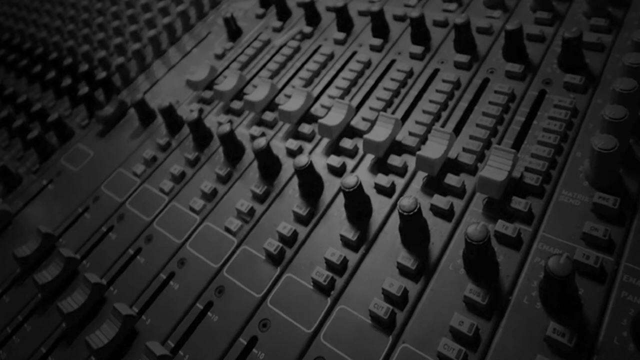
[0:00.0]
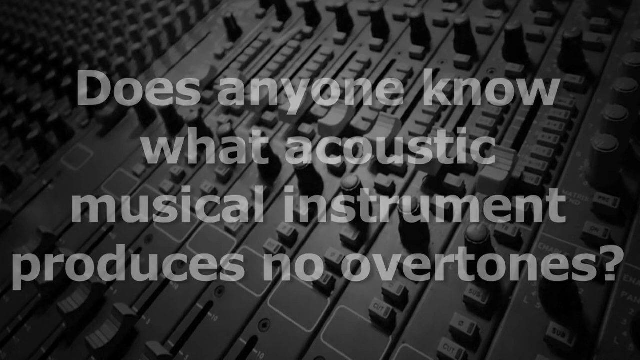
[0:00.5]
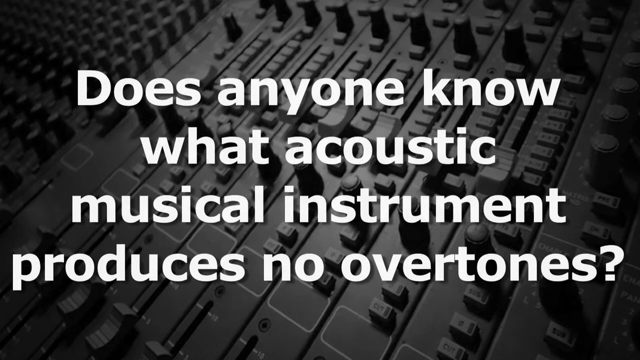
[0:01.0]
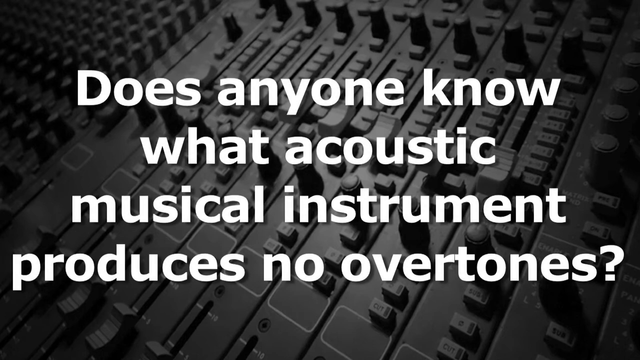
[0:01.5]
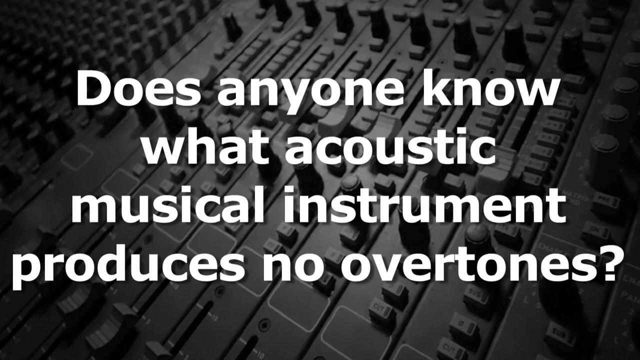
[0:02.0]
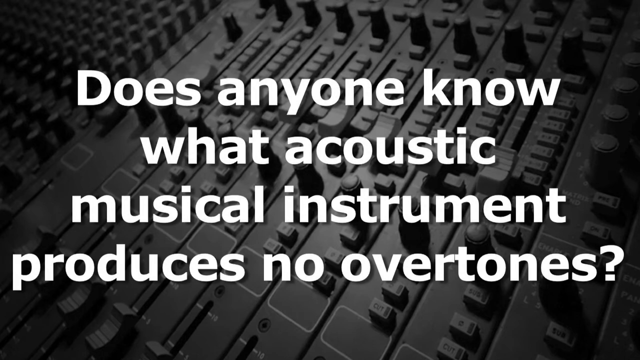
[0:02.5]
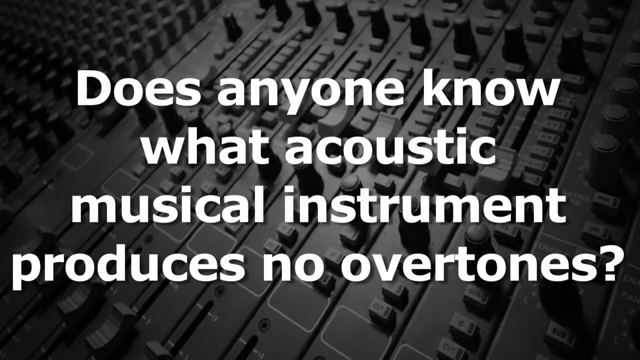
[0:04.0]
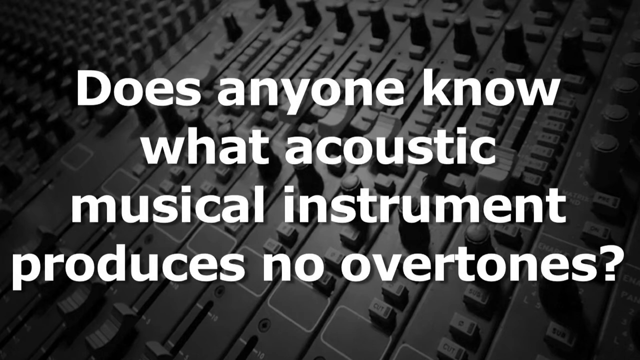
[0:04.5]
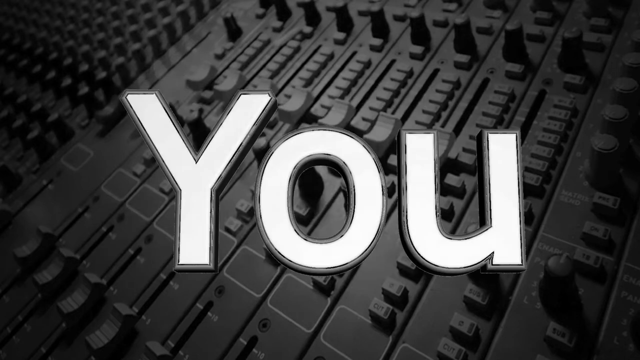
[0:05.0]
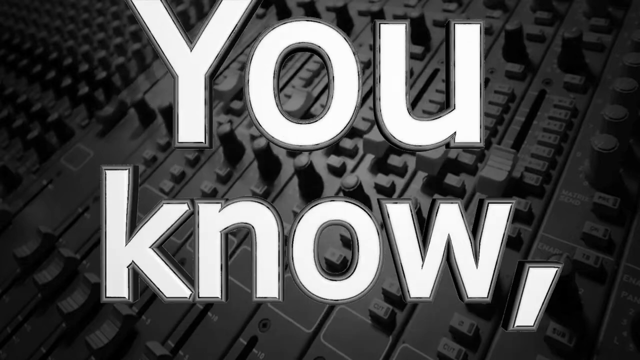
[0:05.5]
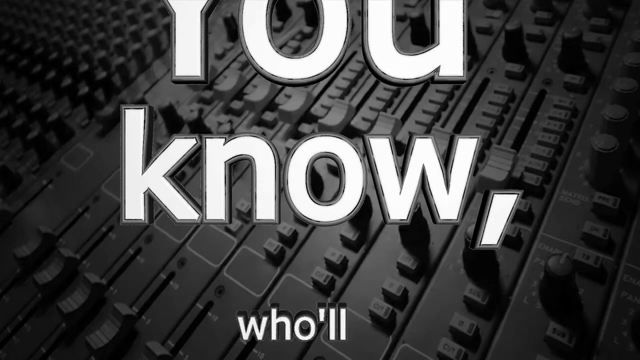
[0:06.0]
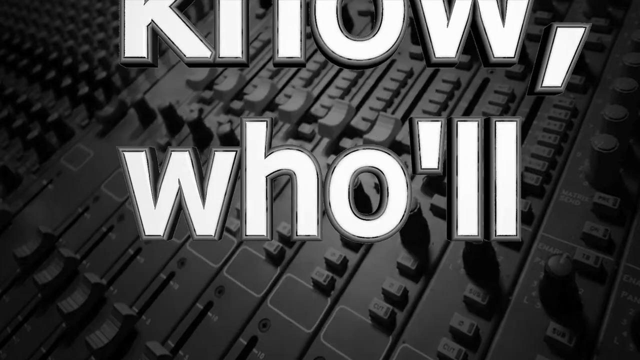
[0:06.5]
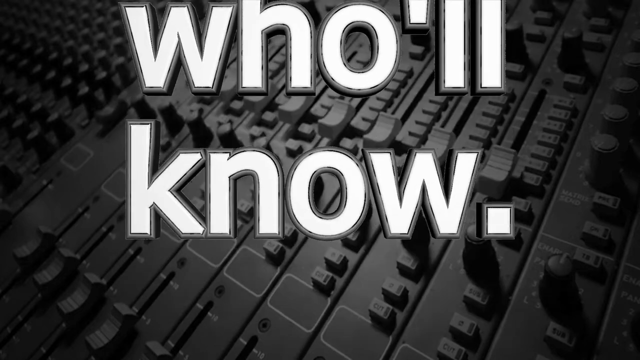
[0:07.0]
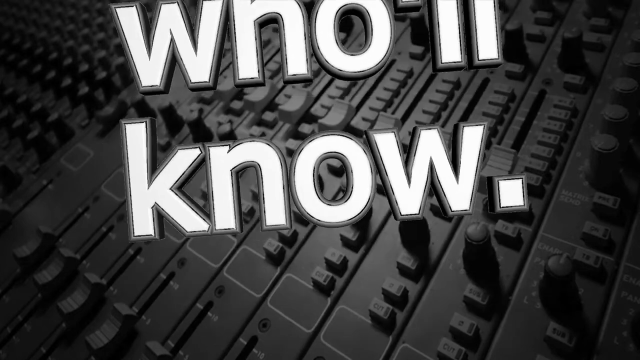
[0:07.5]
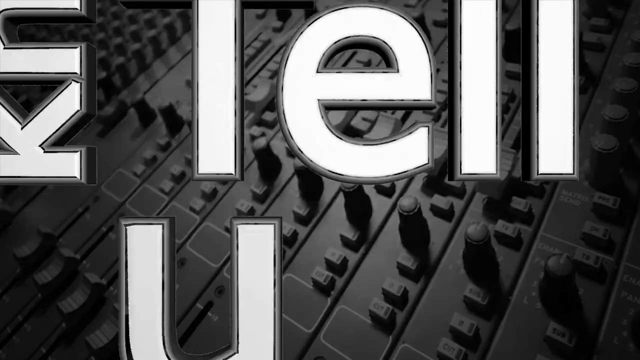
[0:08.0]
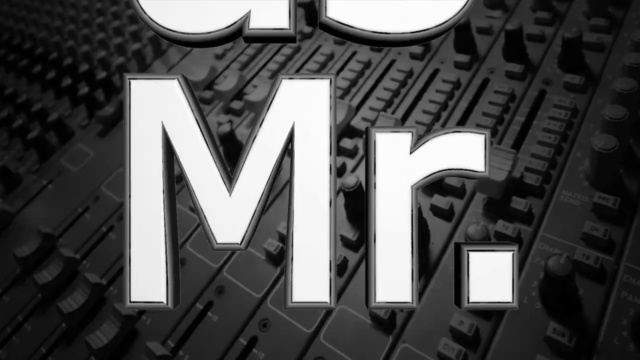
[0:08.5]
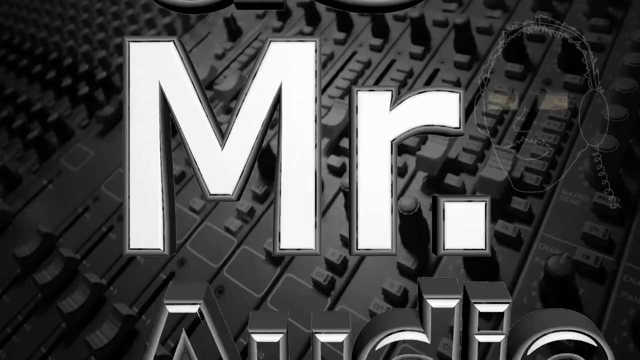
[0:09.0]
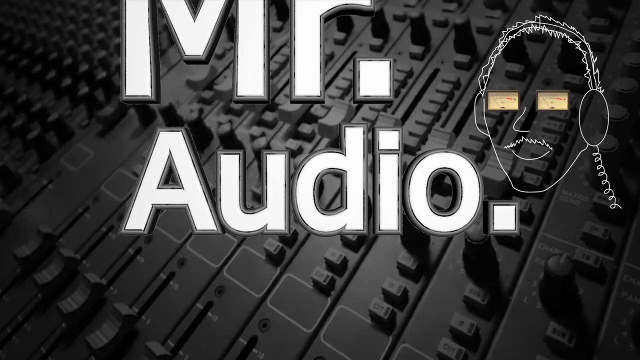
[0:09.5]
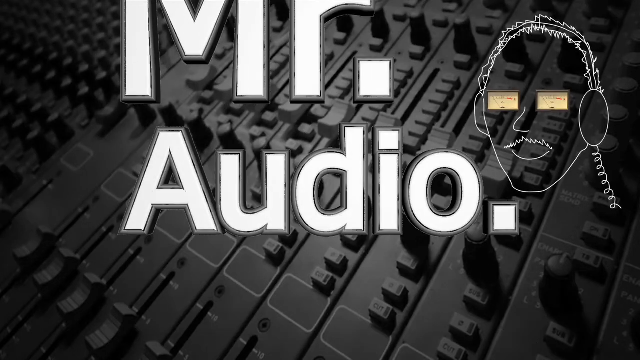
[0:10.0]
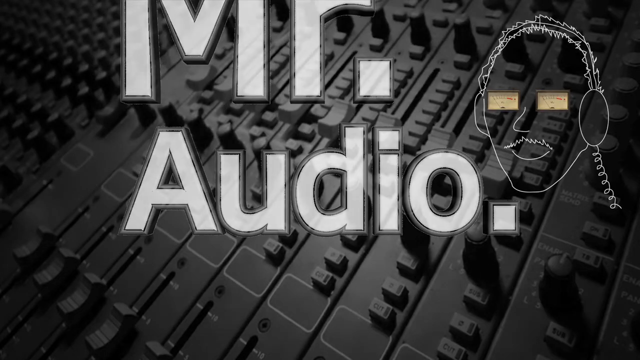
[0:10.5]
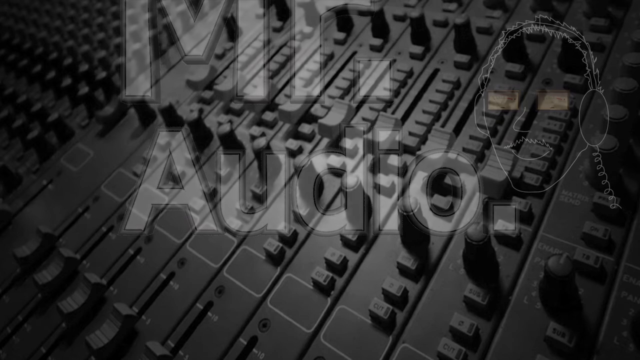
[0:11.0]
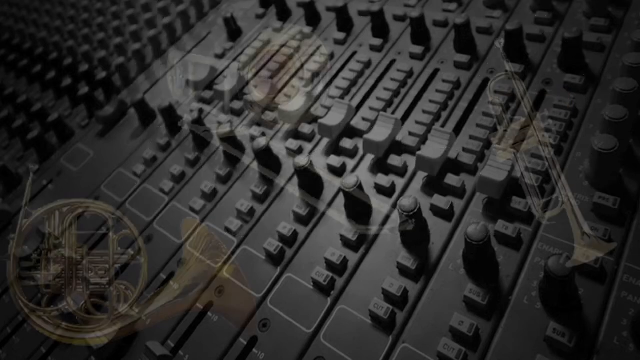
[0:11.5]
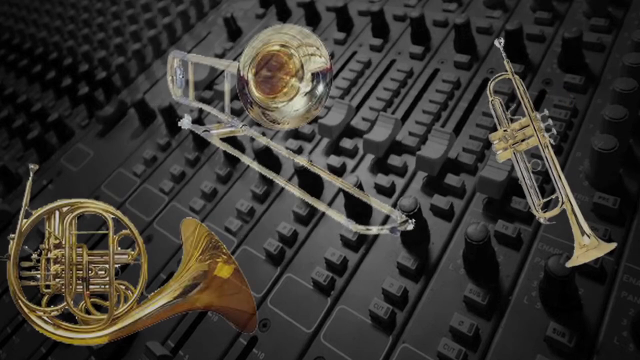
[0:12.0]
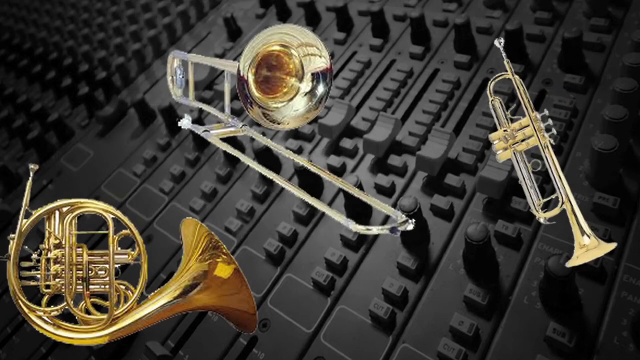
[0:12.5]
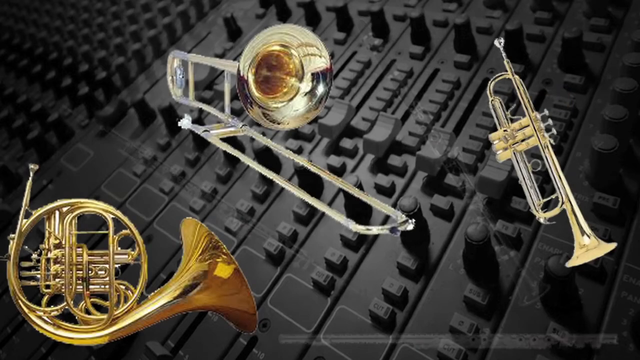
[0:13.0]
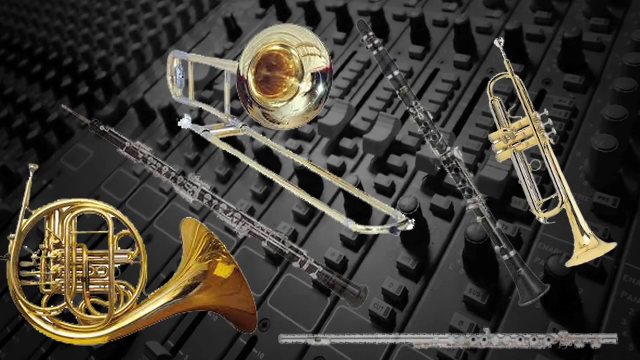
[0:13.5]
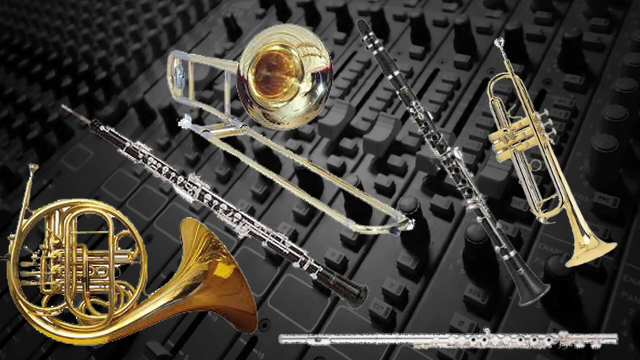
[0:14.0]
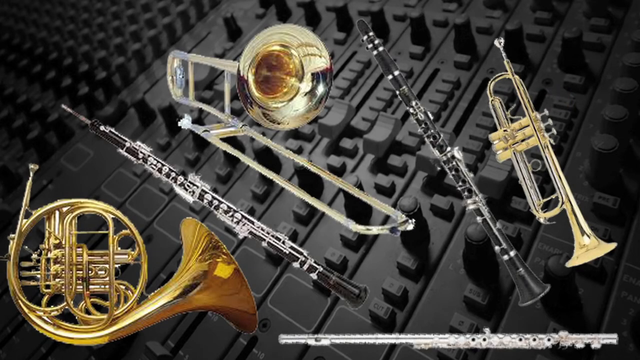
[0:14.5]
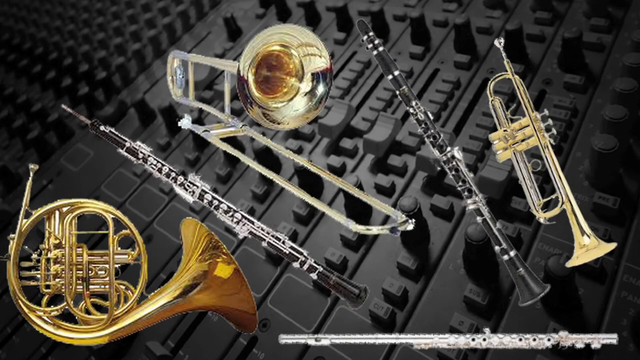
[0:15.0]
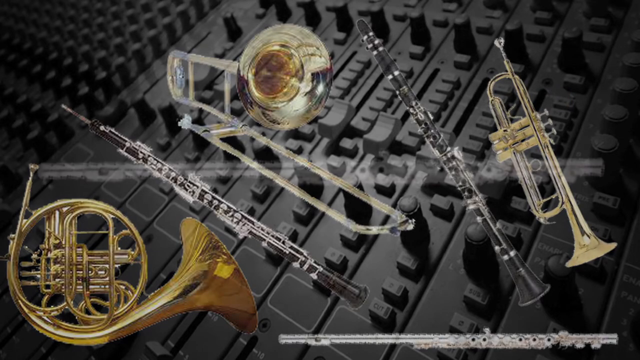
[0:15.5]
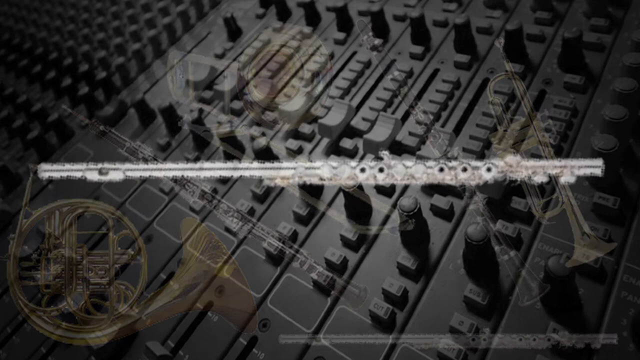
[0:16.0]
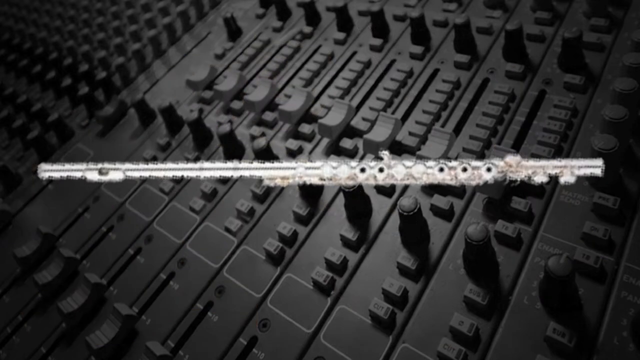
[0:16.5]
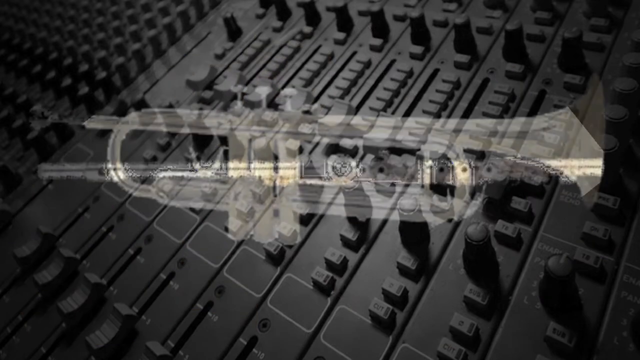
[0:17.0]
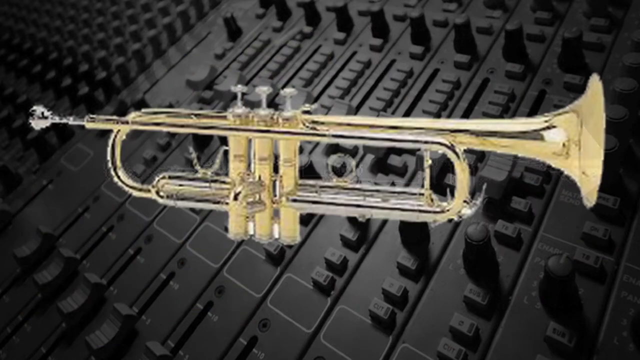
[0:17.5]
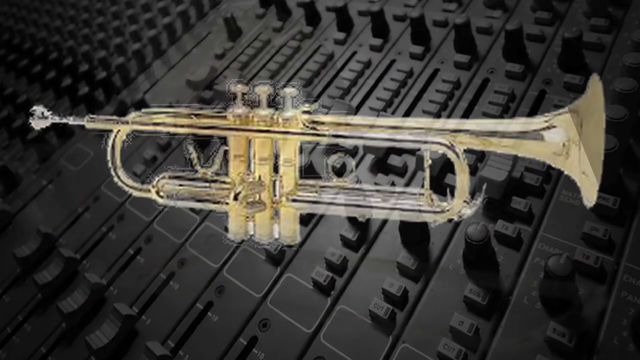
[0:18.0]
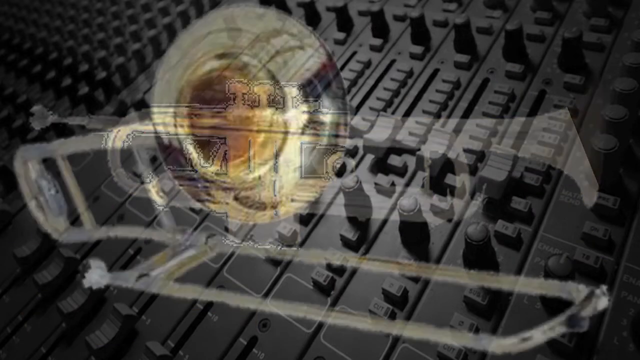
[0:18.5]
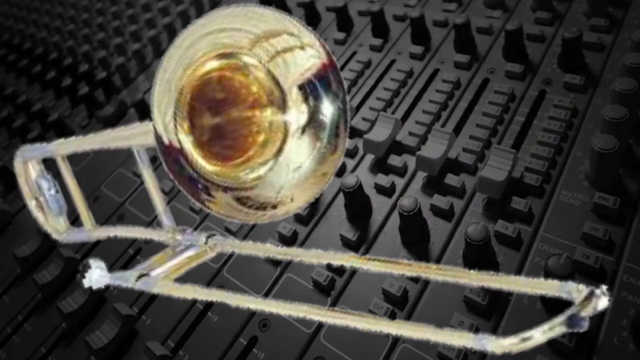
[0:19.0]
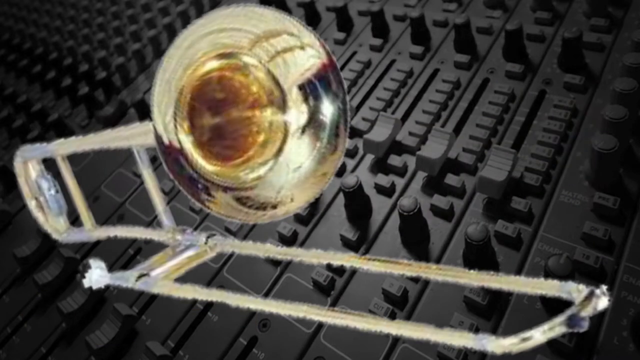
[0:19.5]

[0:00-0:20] The video opens with the text "Does anyone know what musical instrument produces no overtones?" shown in four lines of white letters. The background is a black-and-white photo of what looks like a soundboard, with rows of buttons and knobs that can be turned, and it is very dark. Next the text "You know, who will know." appears, moving from the bottom to the top. The video zooms in, and very stylized, moving text reads "Tell us, Mr. Audio". To the right of "Mr. Audio" is what looks like a graphic of a man's head, almost like a sketch in white. The eyes look to be some sort of gauges and are square shaped, and the figure appears to be wearing headphones; on the right side of the headphones the cord is shaped kind of like a pig's tail. The graphic then disappears, and the video shows a French horn, an oboe, a tuba, a clarinet and a trumpet.